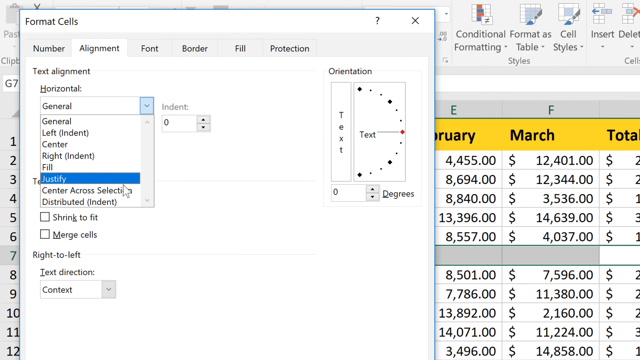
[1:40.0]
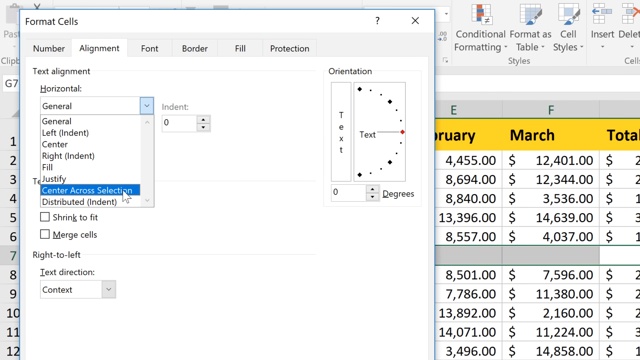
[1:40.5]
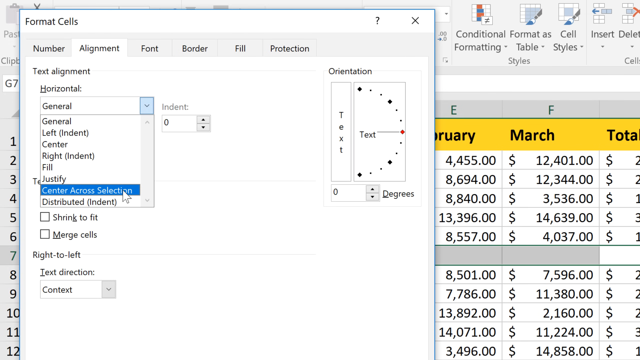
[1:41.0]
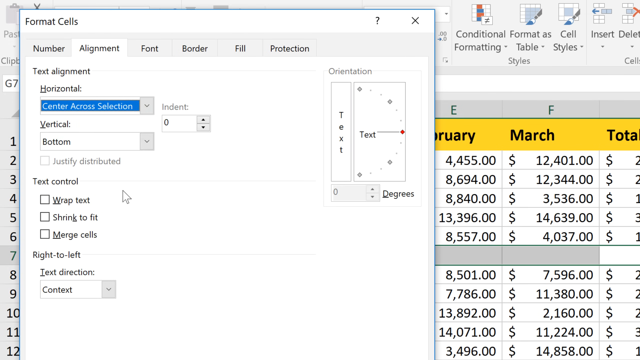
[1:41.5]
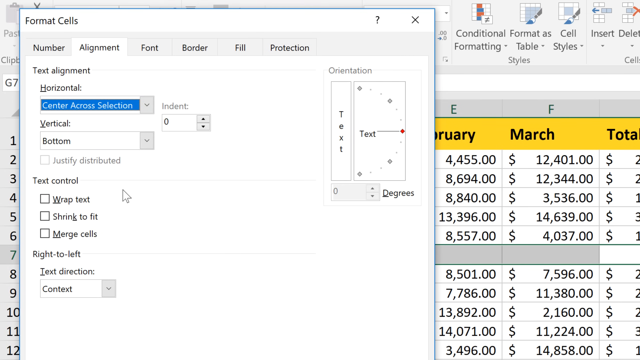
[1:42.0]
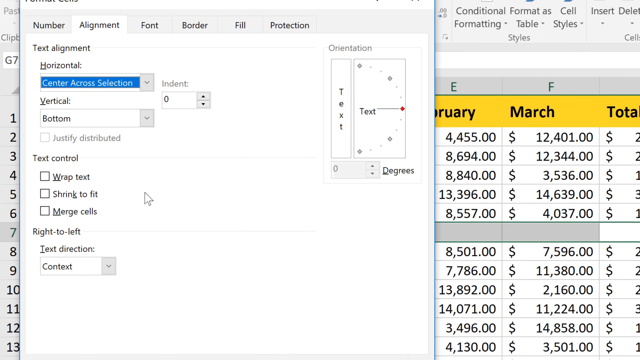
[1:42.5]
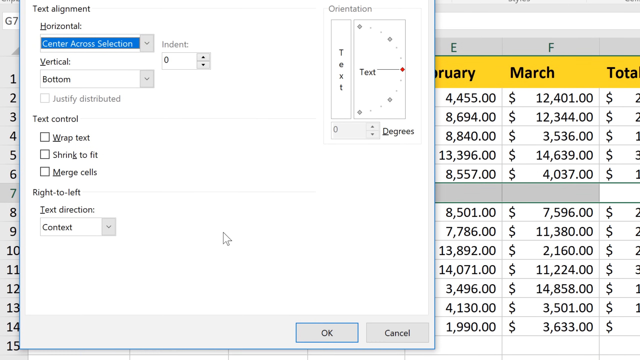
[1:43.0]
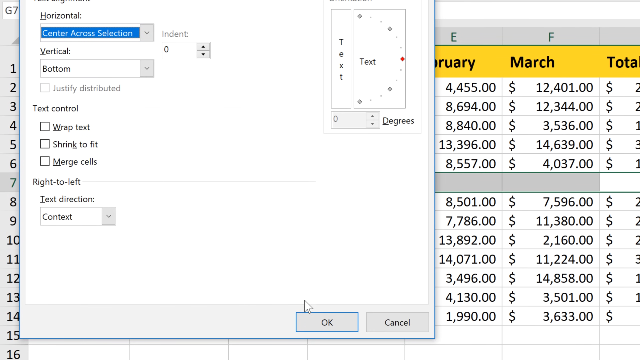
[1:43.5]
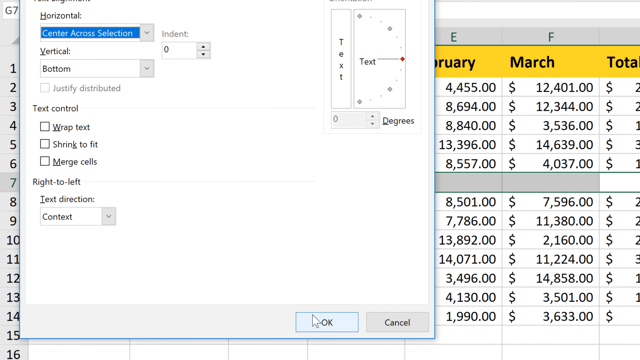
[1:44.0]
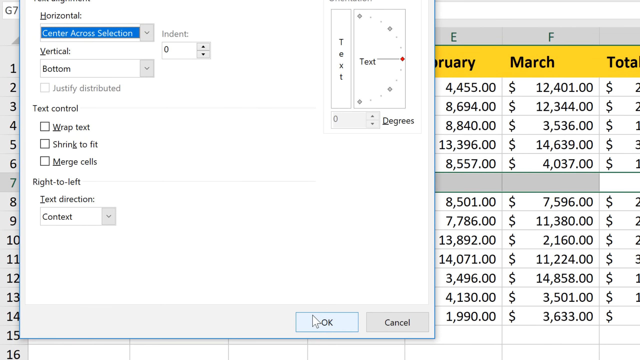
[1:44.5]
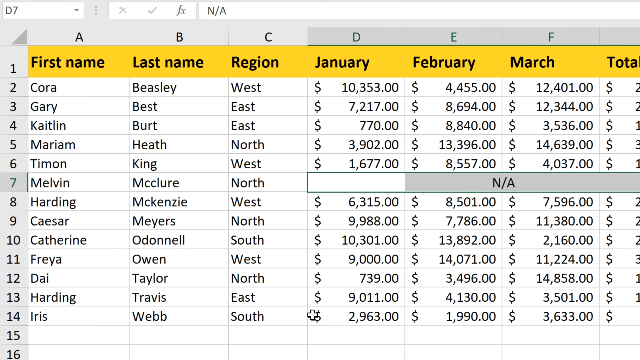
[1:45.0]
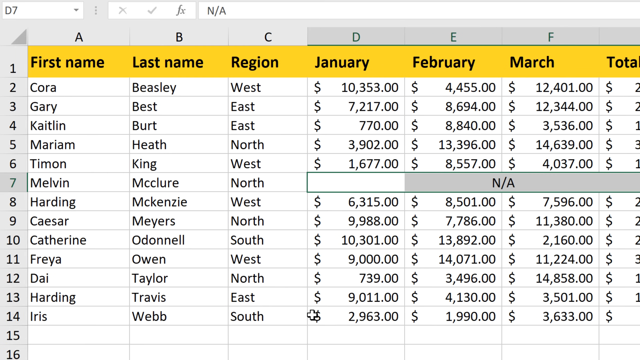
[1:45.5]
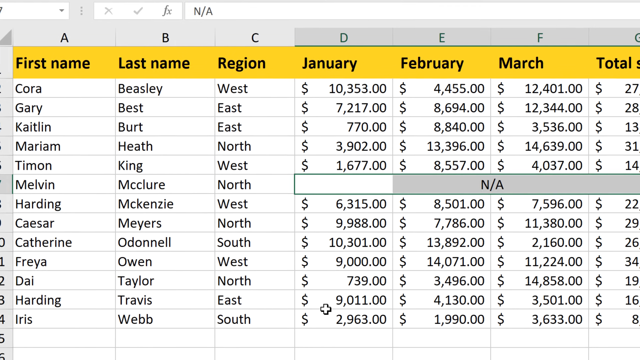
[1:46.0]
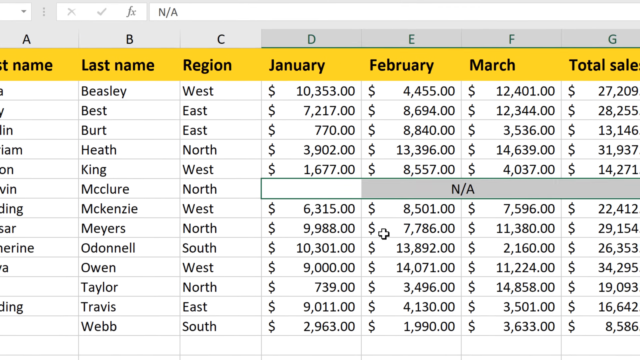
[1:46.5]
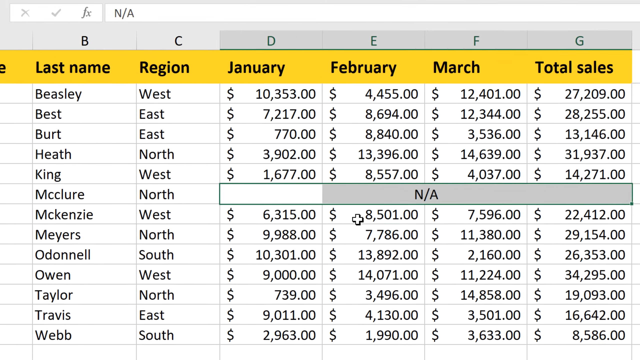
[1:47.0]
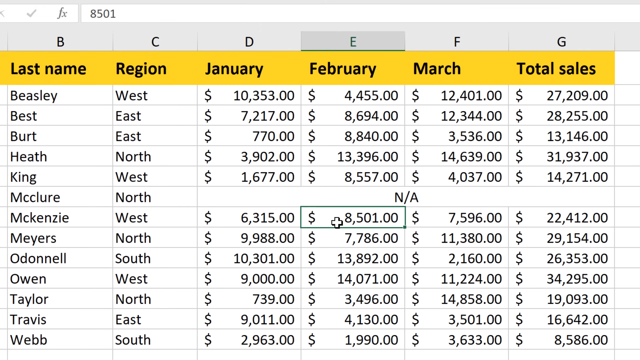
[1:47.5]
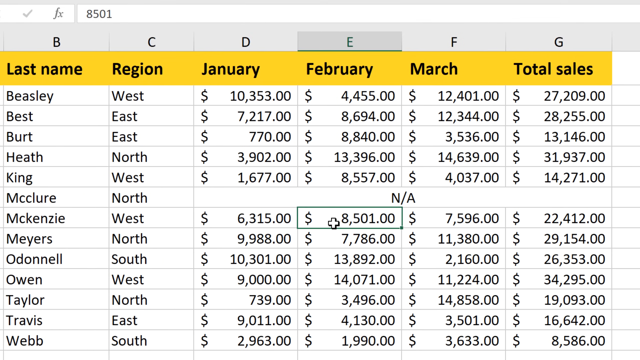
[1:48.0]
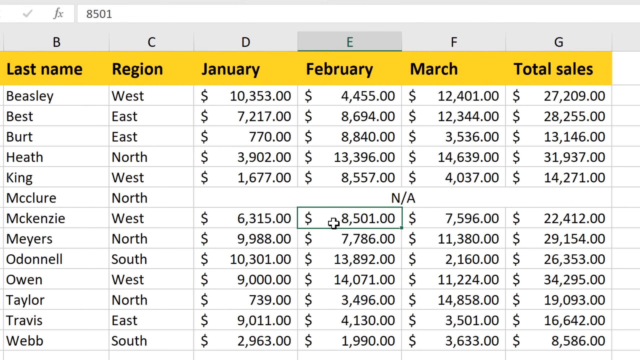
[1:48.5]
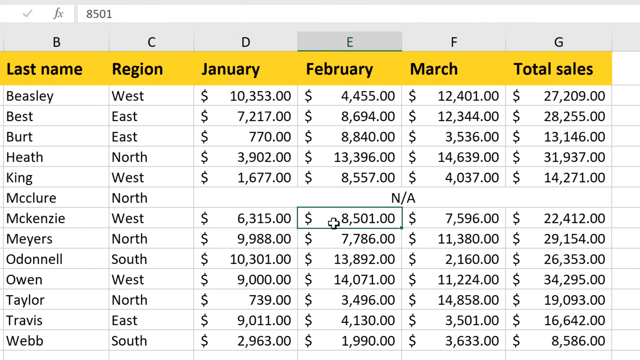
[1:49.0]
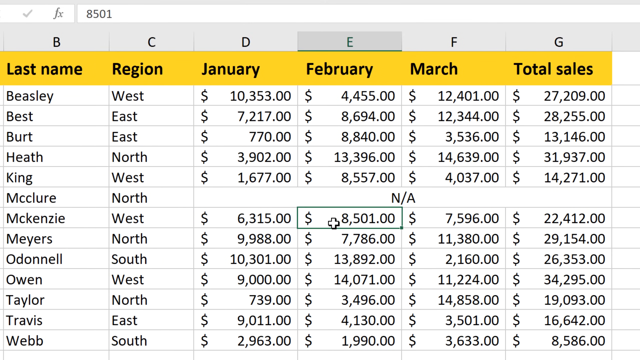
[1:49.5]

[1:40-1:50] The user scrolls through horizontal text alignment options, scrolls down, clicks an option at the bottom called "Center Across Selection," and clicks the OK button. The text alignment changes. The user zooms in, scrolls, and clicks on a February cell, which apparently opens up that option; this is the row right under the last name McClure, the last name McKenzie.